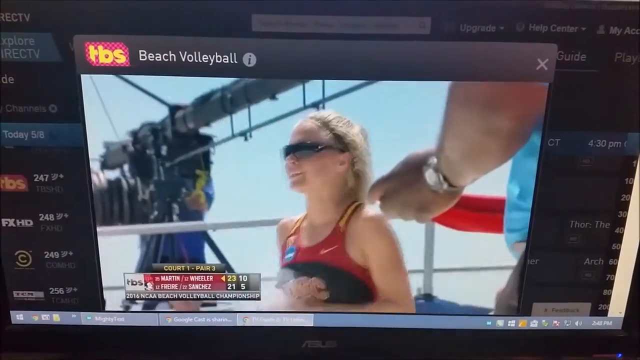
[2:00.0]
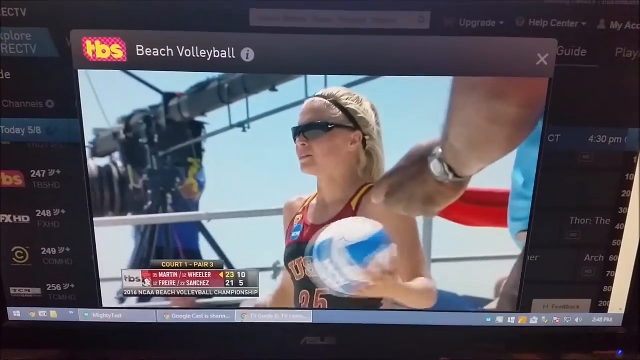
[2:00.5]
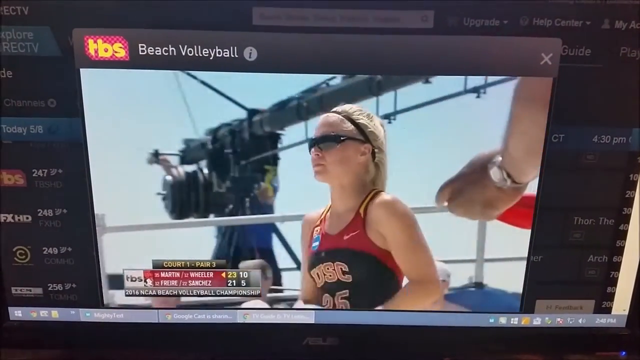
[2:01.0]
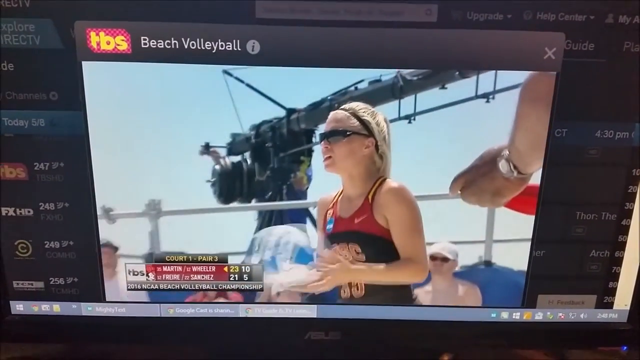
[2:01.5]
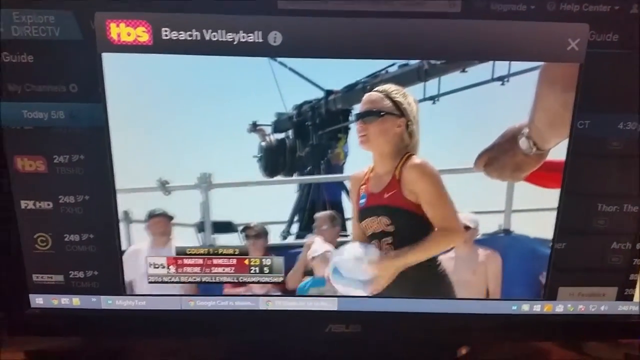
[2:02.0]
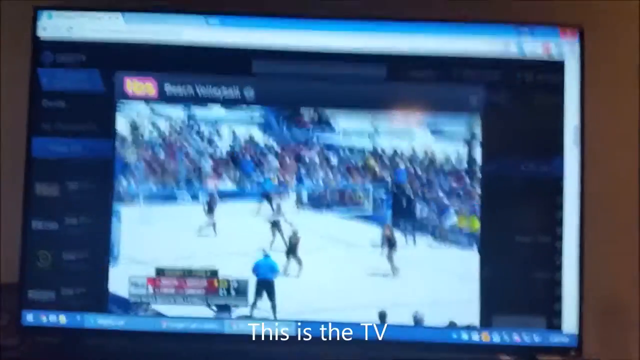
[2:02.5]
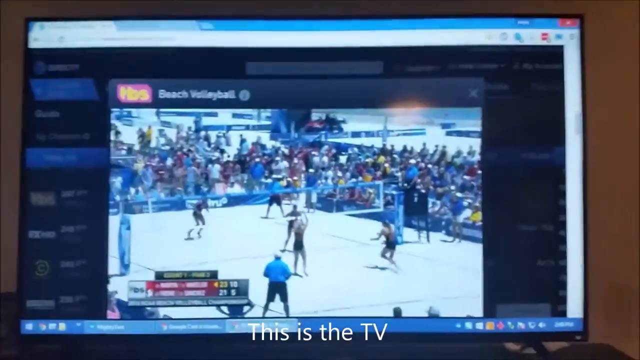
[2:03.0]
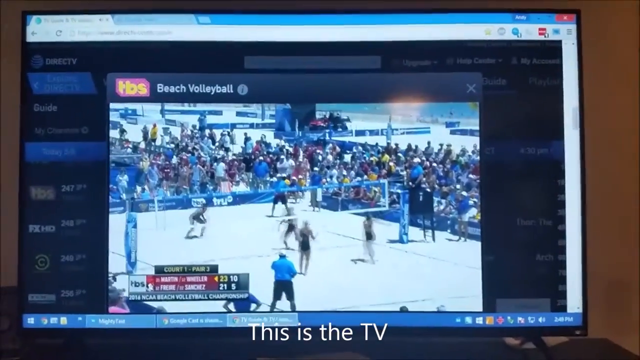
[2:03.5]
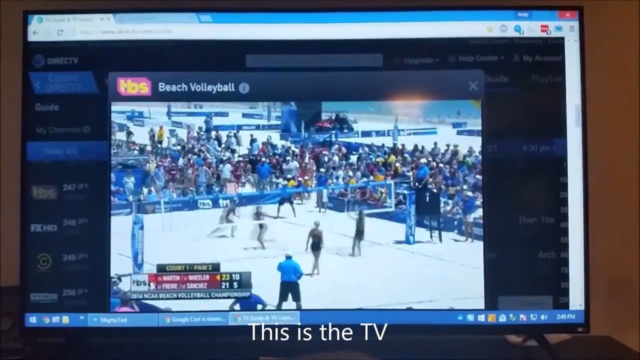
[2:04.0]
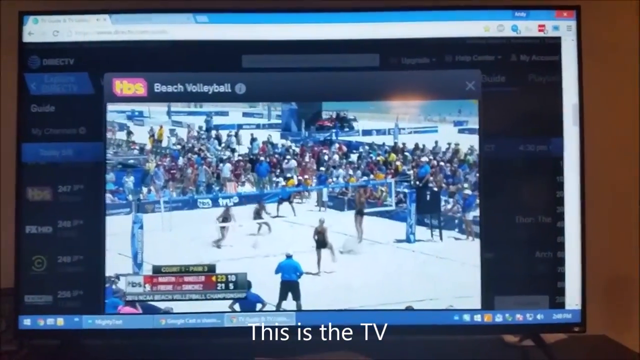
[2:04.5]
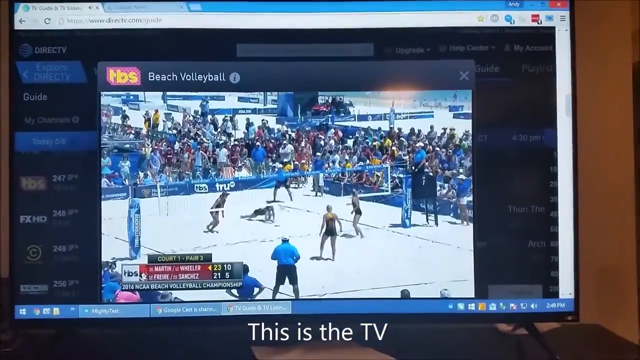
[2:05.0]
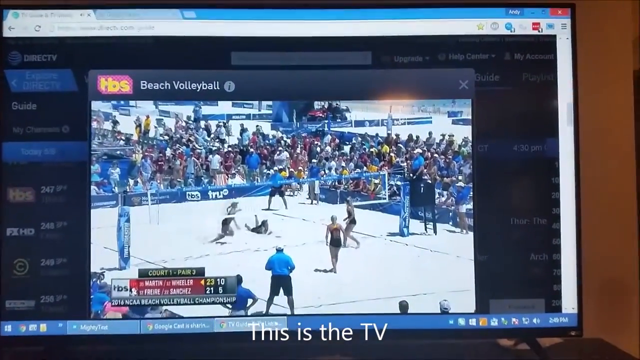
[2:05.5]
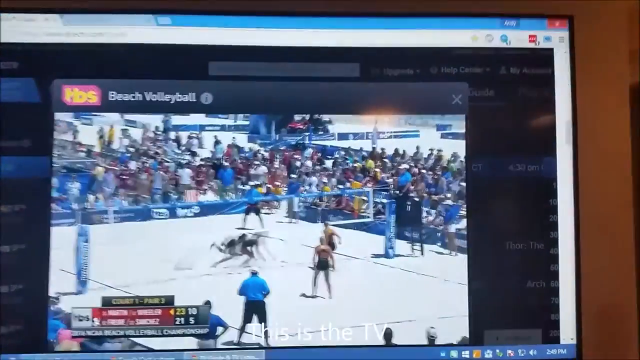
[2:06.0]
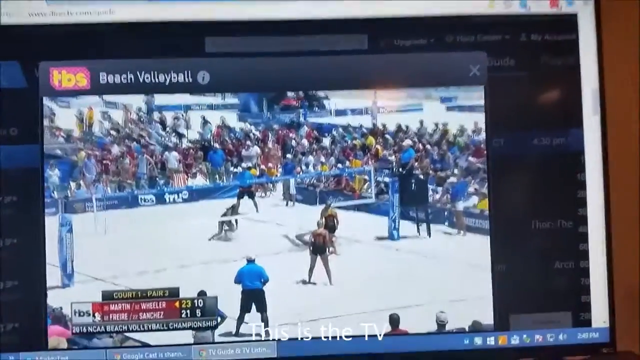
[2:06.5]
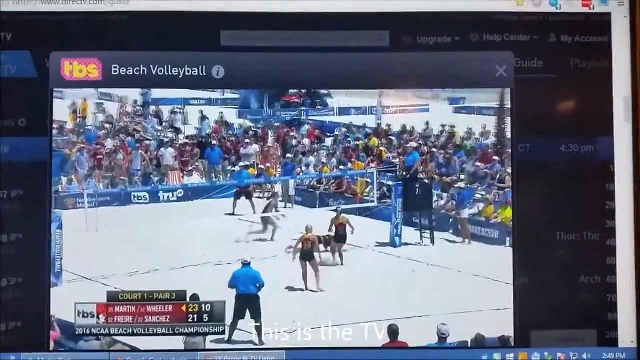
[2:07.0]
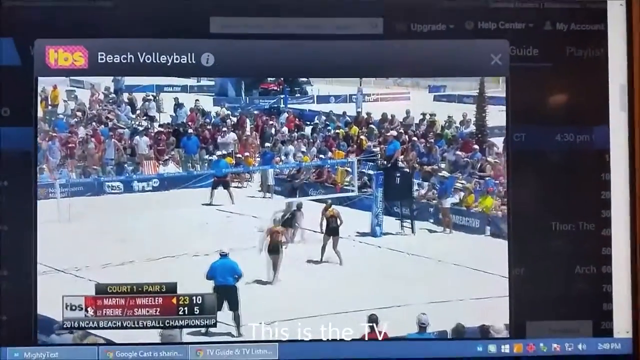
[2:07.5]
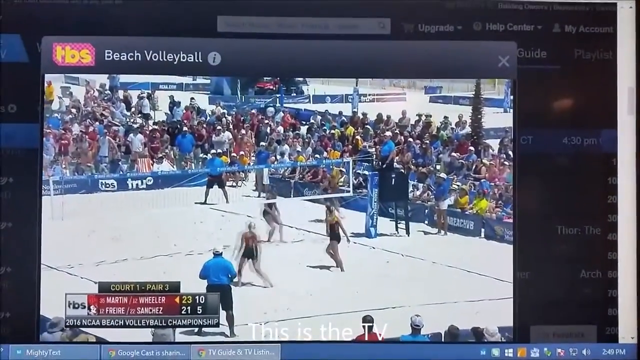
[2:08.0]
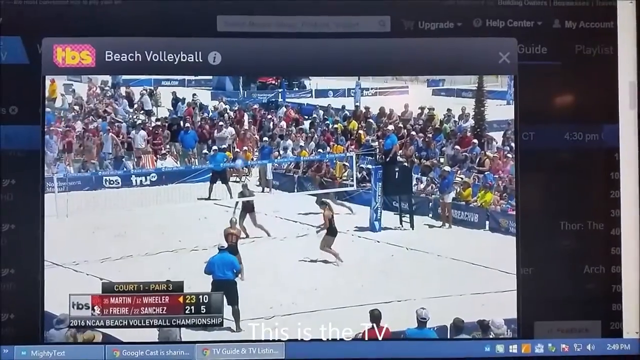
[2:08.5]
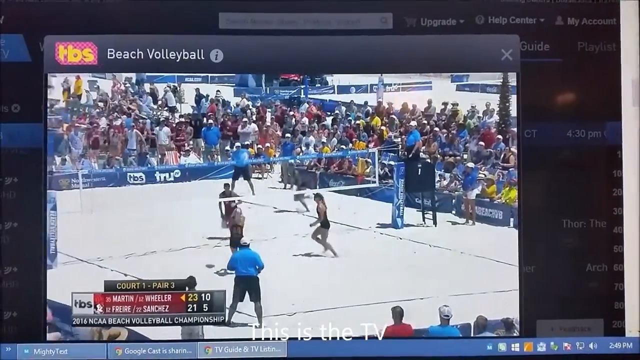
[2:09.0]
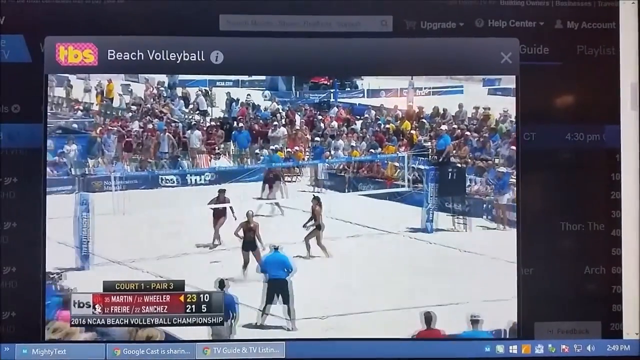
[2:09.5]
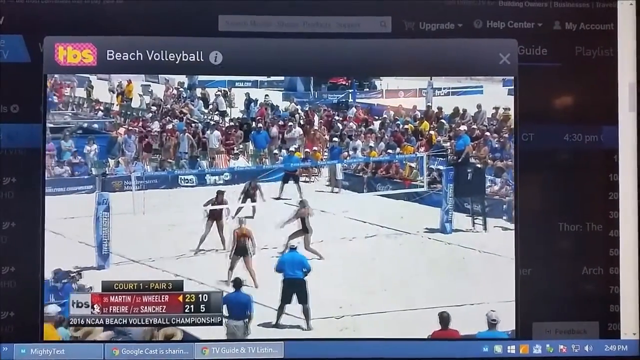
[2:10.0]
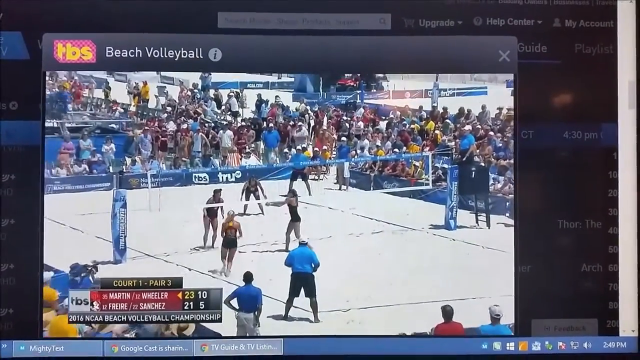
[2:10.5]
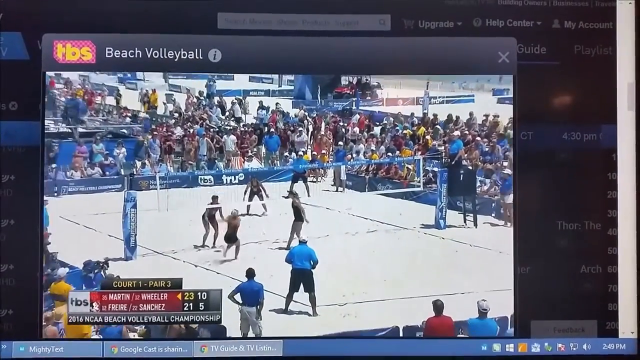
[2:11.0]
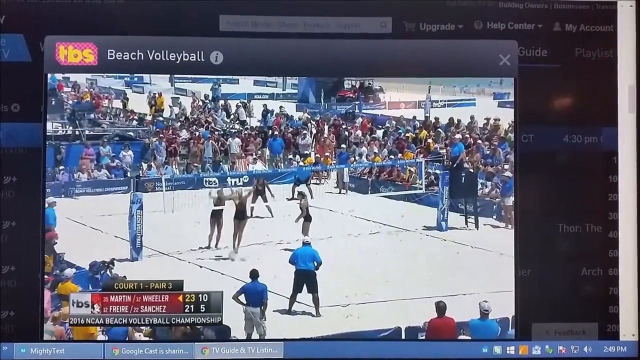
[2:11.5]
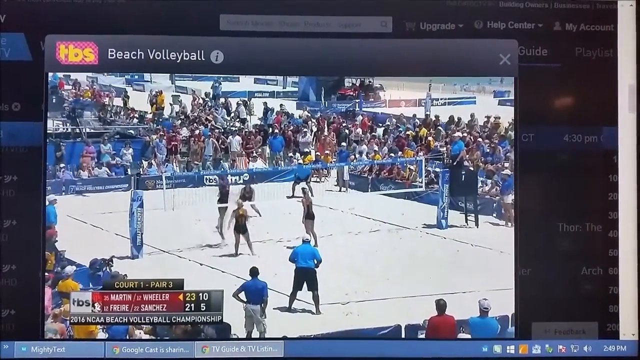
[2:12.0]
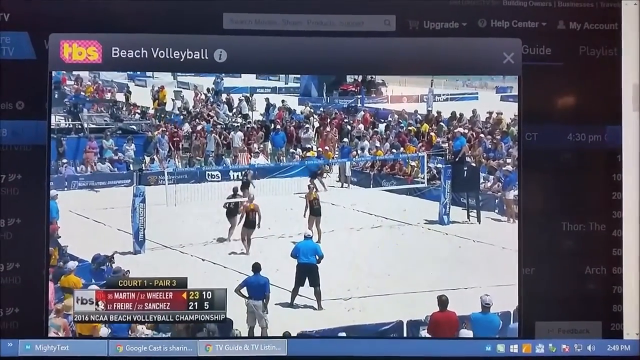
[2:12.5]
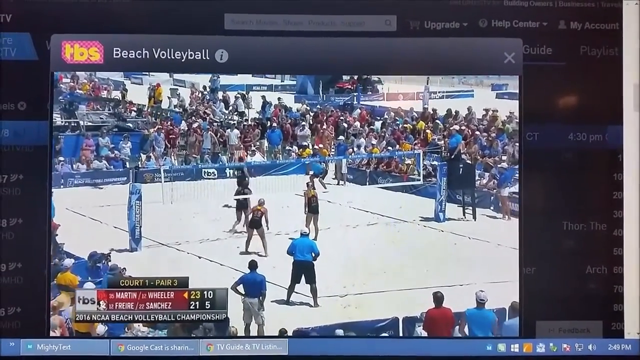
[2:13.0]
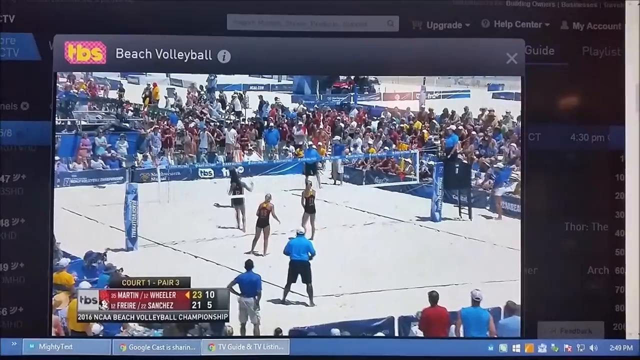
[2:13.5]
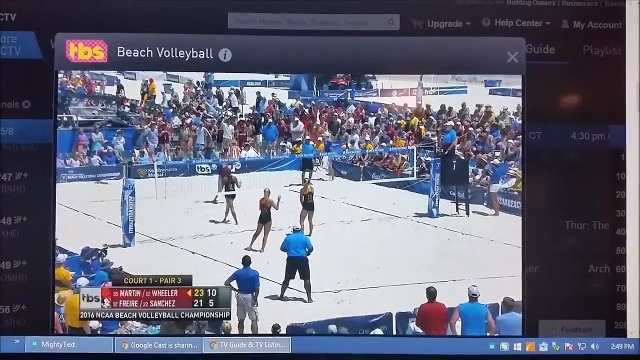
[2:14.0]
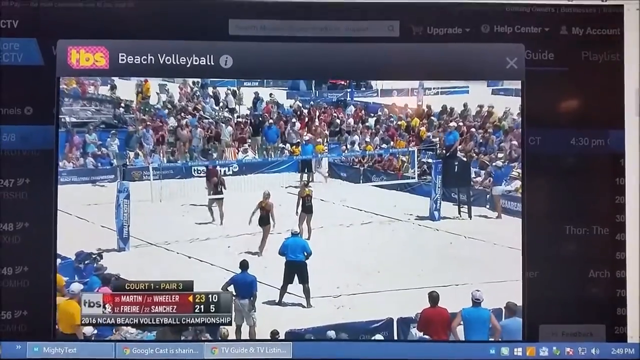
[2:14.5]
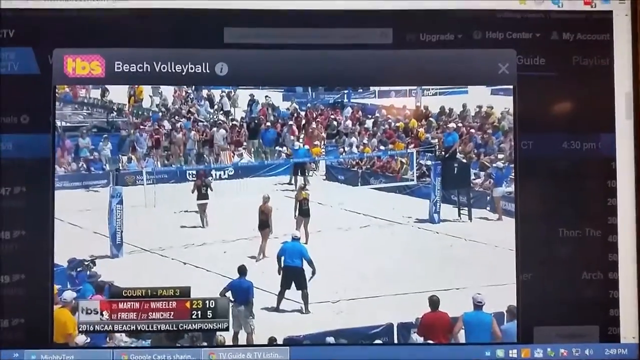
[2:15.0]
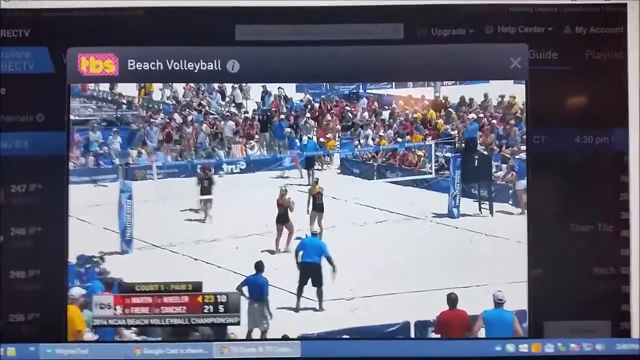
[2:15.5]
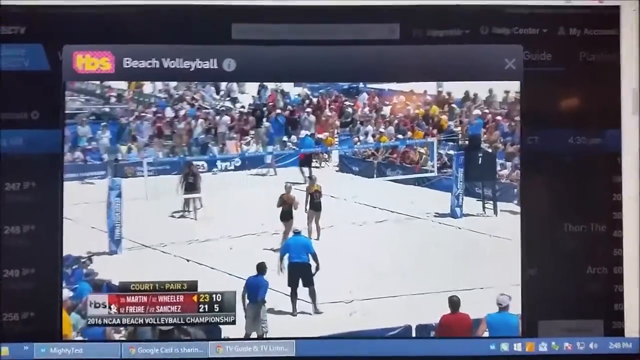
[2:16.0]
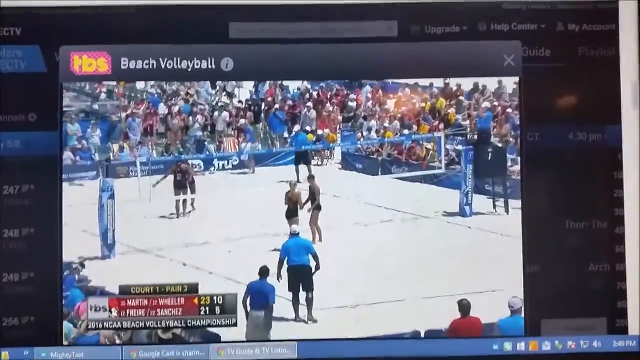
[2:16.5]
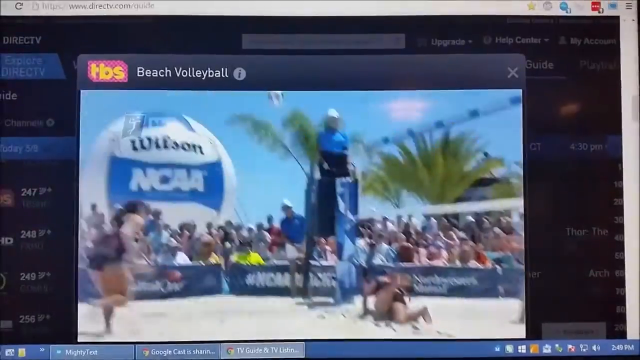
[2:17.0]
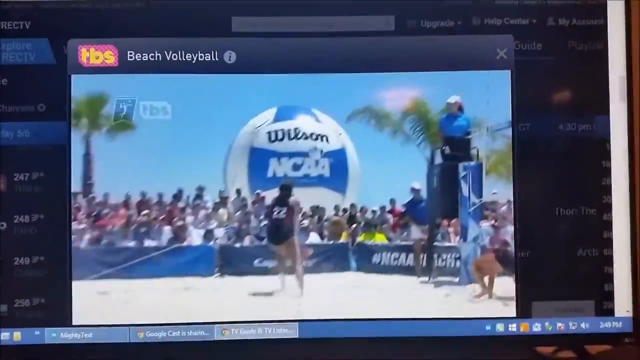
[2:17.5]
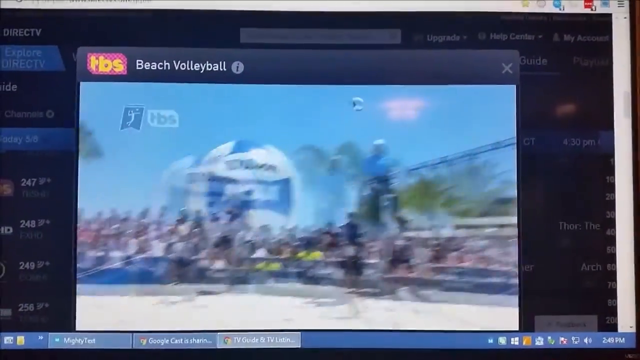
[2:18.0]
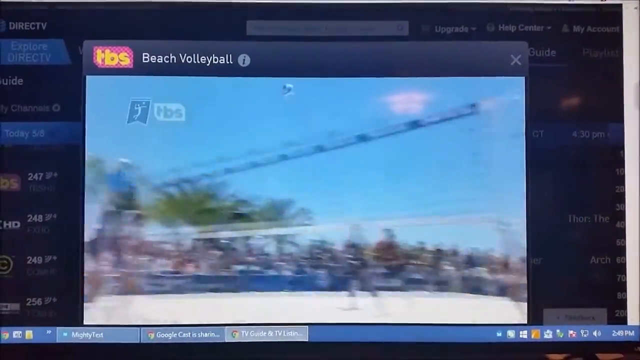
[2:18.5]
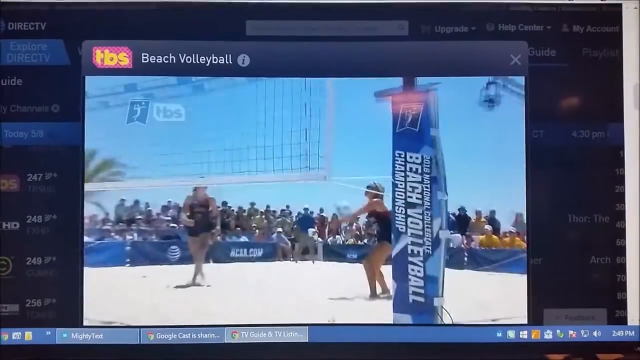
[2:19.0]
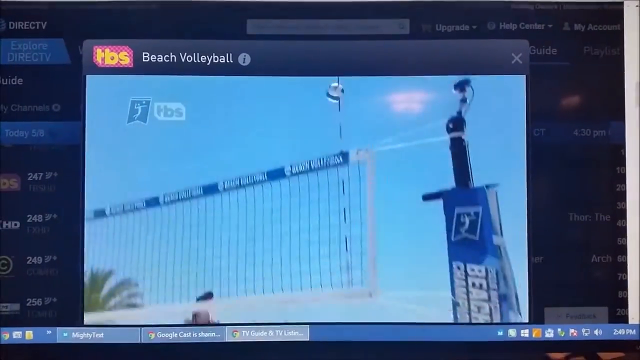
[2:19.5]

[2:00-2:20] A laptop screen shows volleyball players competing on both sides of the net, with NCAA in the background. In the top left-hand corner of the screen, text reads "TBS beach volleyball," and there is an icon showing the volleyball players competing. In the background, various channels are on the TV screen, from which a channel can be chosen.